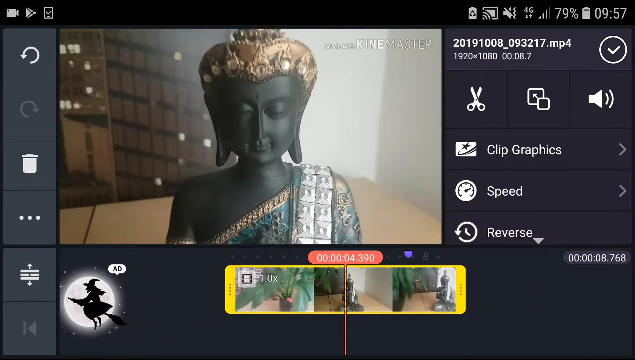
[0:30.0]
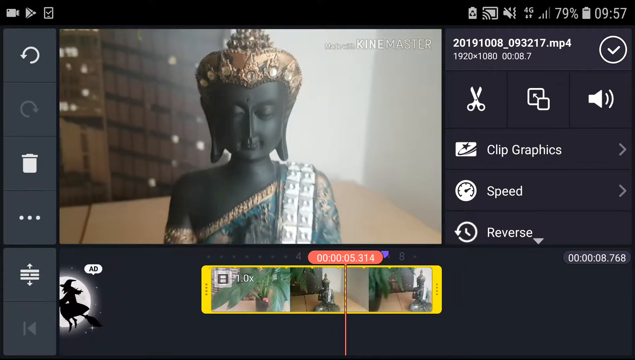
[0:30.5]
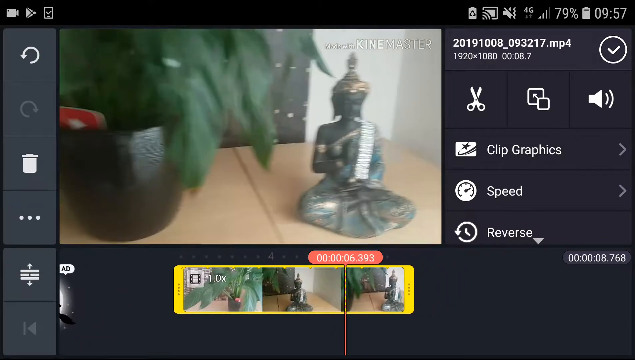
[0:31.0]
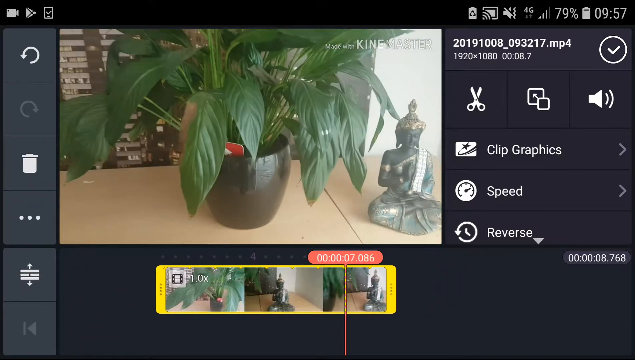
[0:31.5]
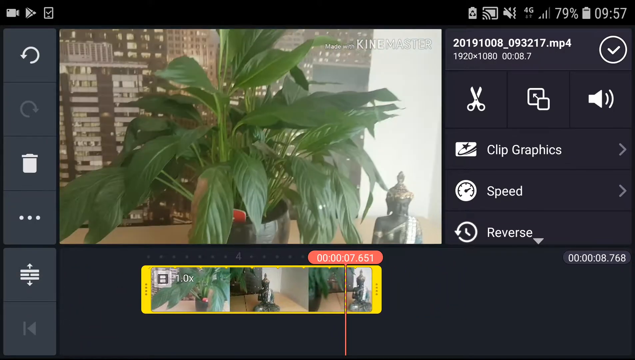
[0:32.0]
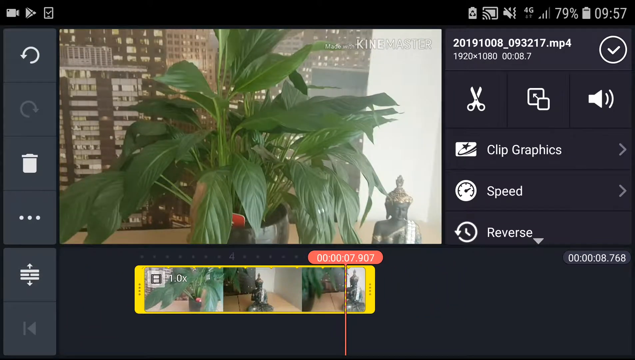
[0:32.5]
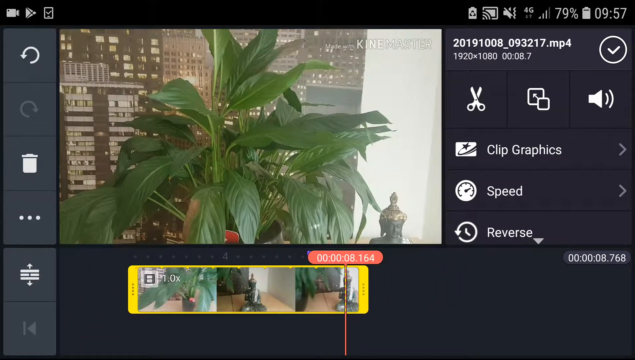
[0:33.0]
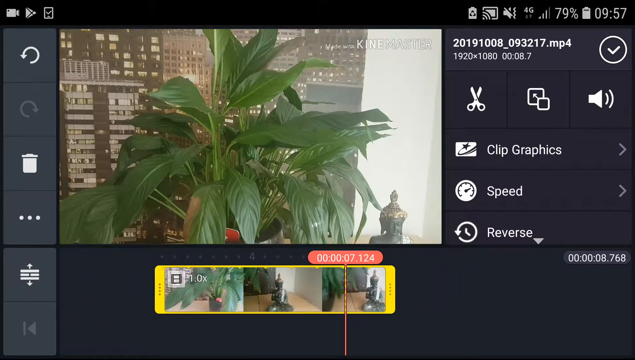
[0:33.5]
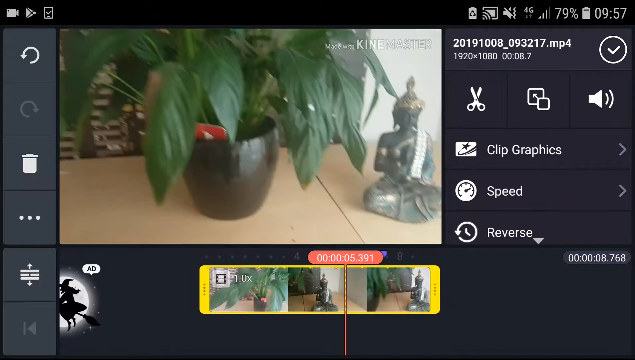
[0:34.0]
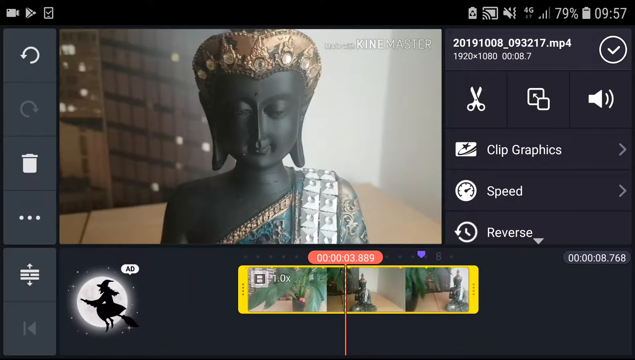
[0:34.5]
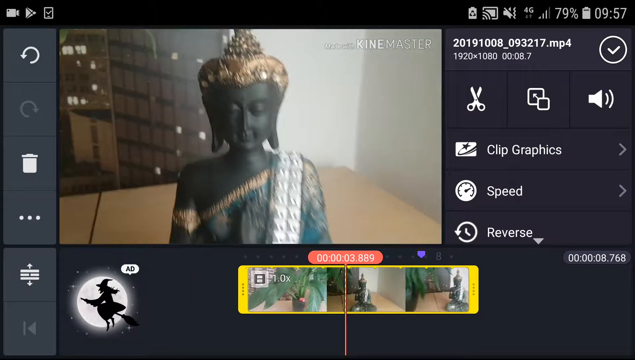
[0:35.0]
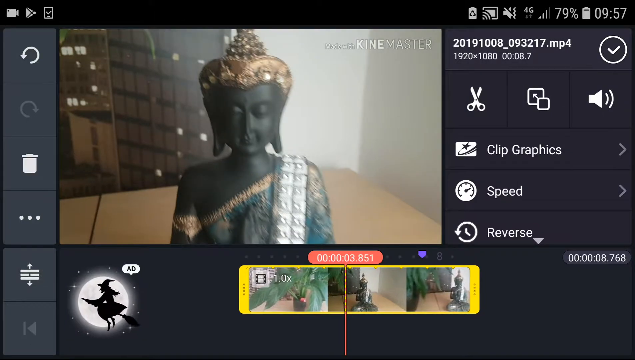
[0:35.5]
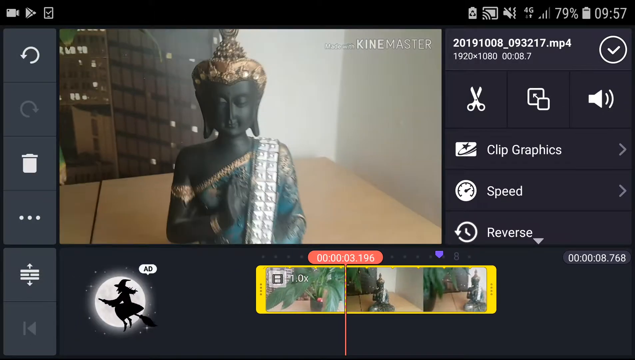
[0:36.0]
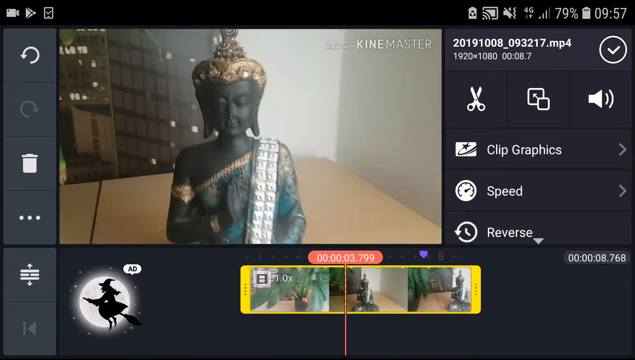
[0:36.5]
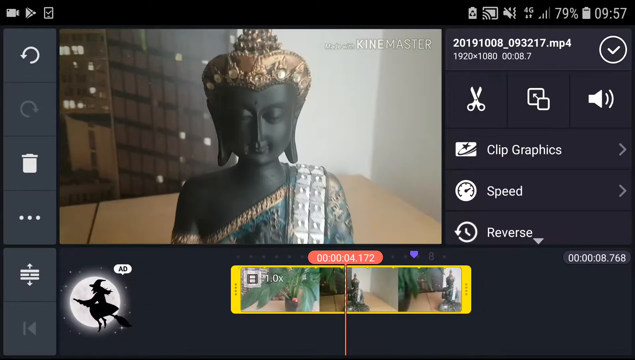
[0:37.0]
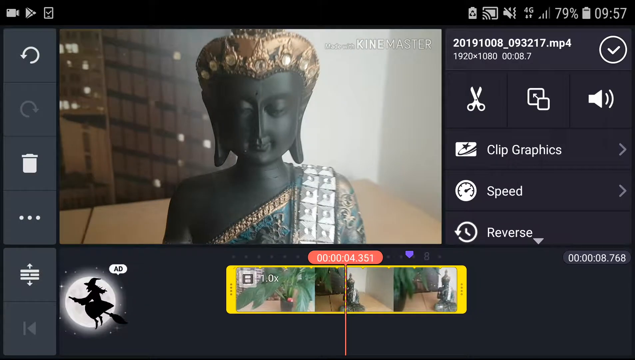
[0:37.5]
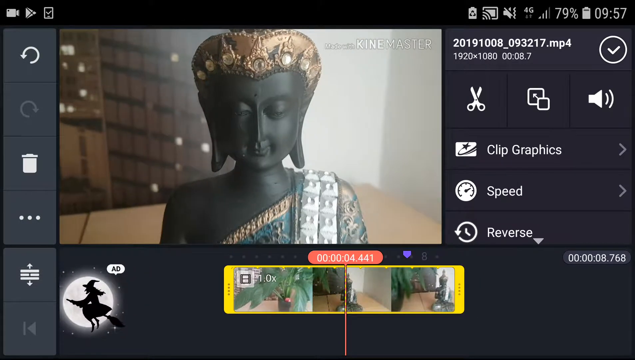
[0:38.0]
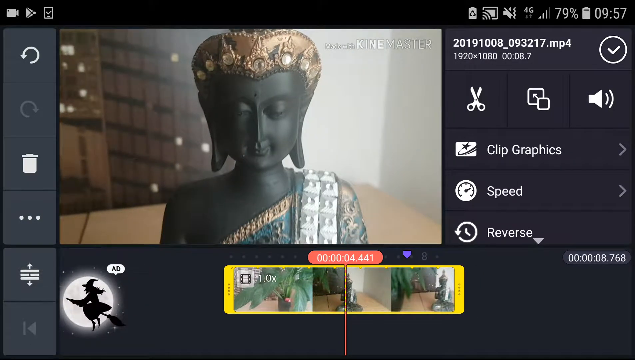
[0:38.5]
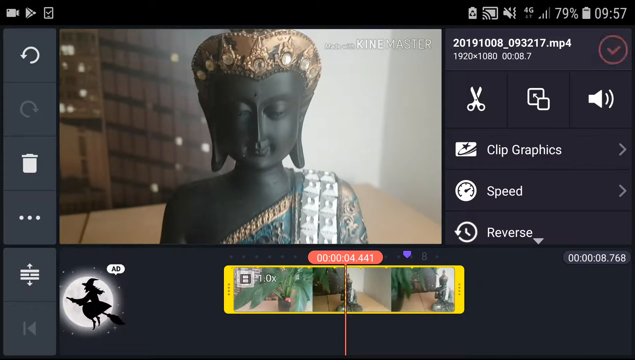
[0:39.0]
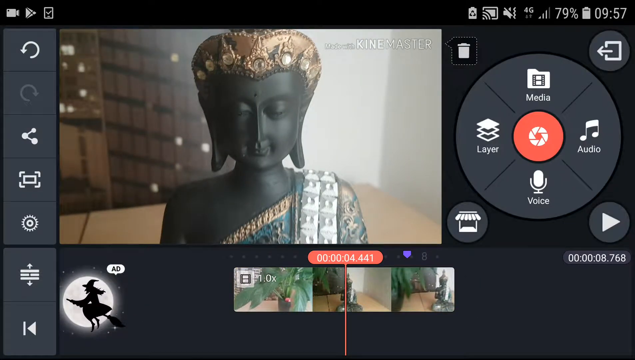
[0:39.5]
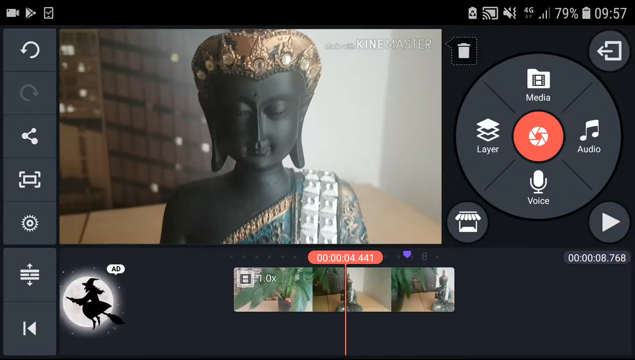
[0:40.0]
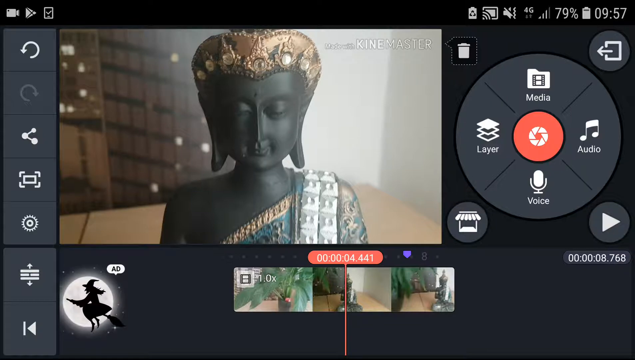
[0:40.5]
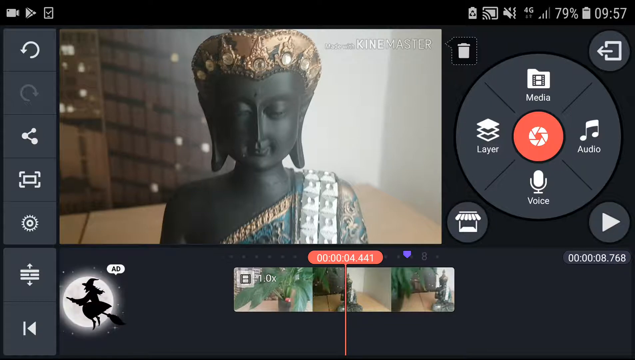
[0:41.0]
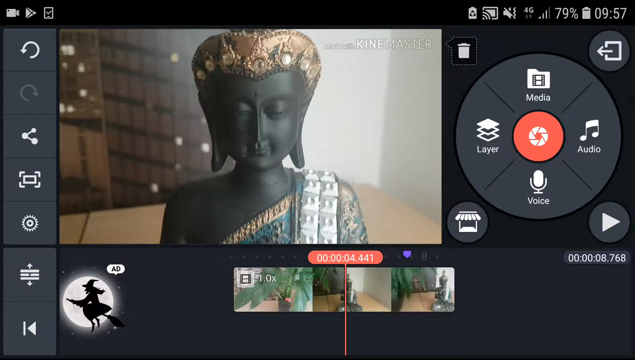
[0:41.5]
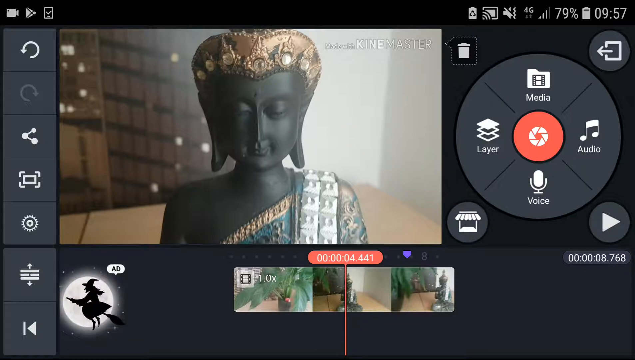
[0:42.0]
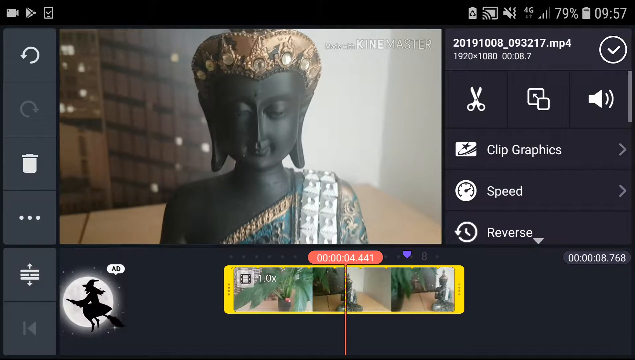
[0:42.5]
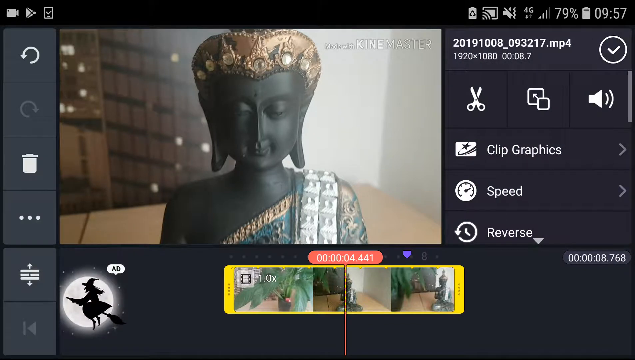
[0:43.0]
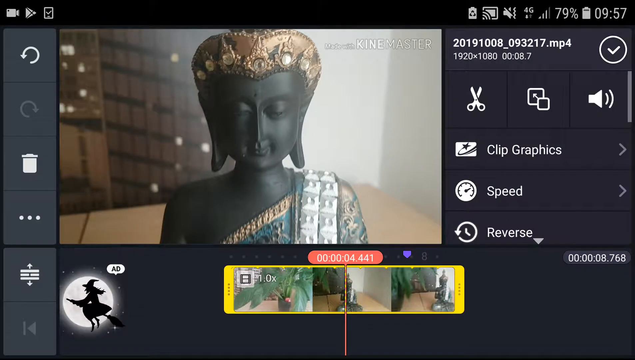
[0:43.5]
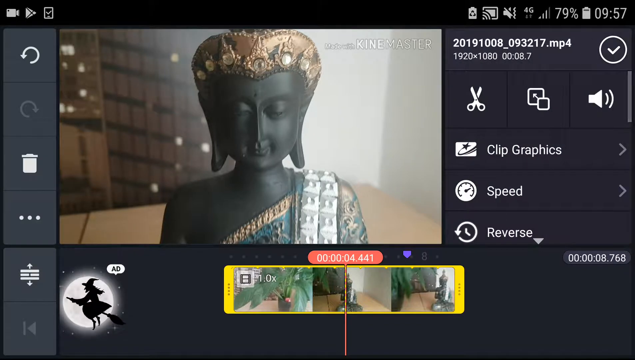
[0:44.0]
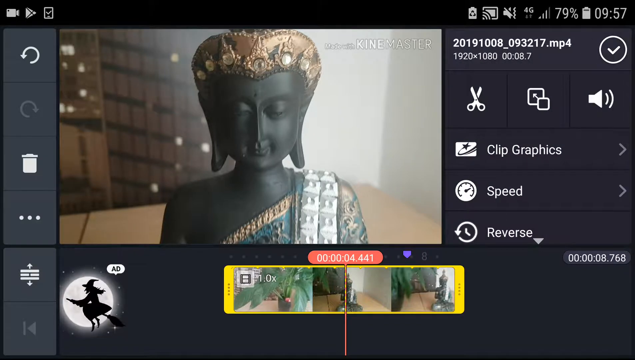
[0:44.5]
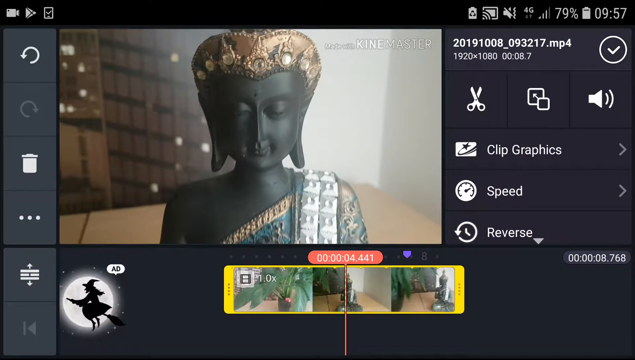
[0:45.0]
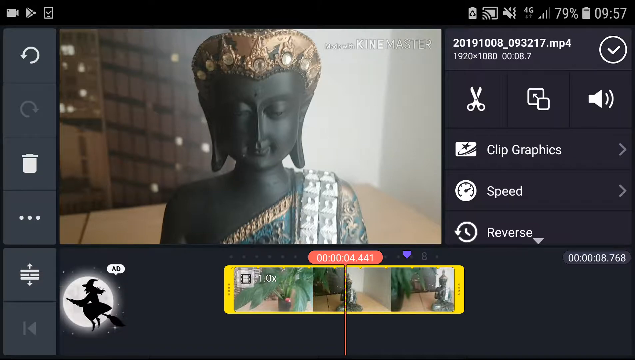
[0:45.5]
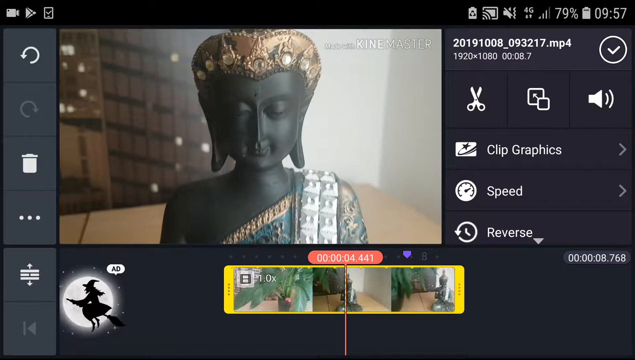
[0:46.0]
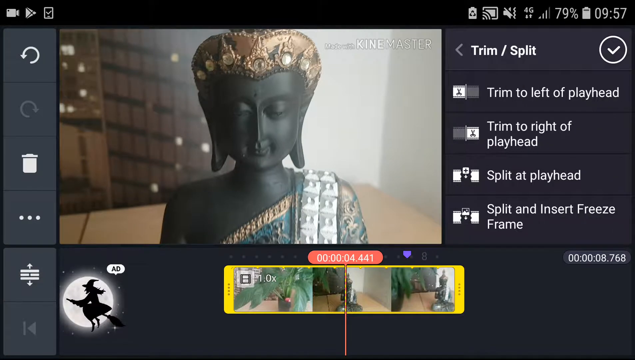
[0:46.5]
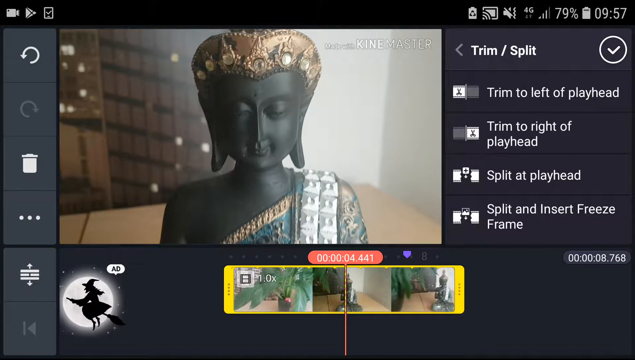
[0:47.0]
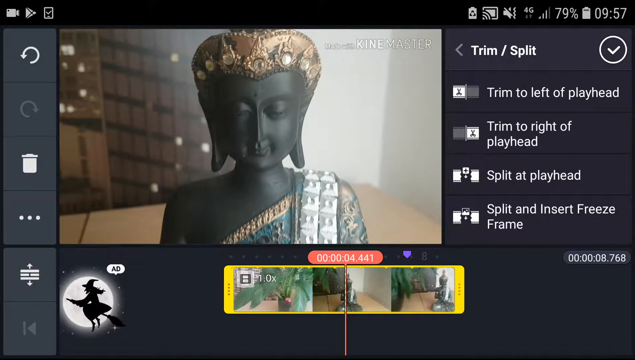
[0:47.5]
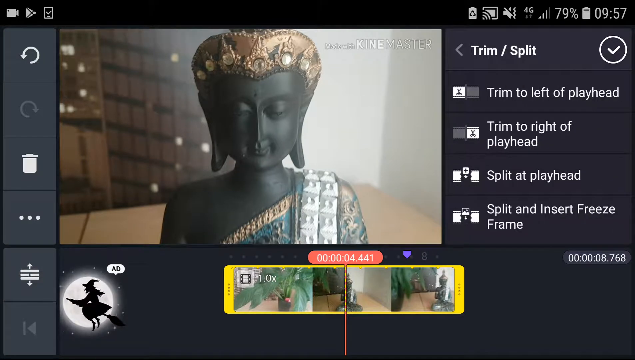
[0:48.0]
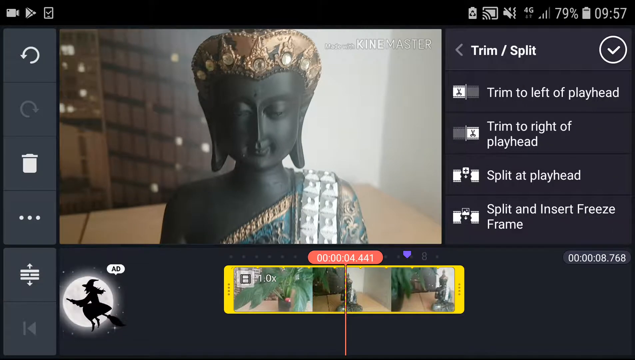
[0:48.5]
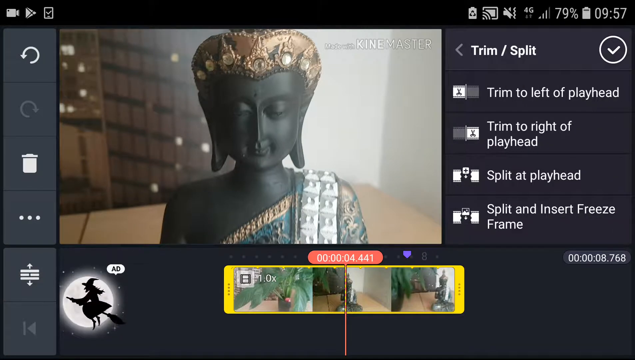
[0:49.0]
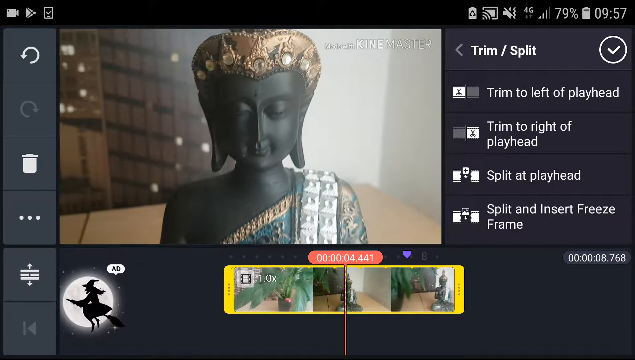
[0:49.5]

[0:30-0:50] On the left side of the editor there is a trash can, with an undo button in the middle. There is a picture, and a little witch on a broom that is probably an ad. On the right side are reverse speed, clip graphics, a pair of scissors and a volume control. The time is 9:57 with 79% battery left. The user goes through the video, apparently trying to find a certain part, and zooms in on the doll. They seem to be figuring out what to do with it, then hit split and insert freeze frame. Barely visible text apparently reads "Ken Master".